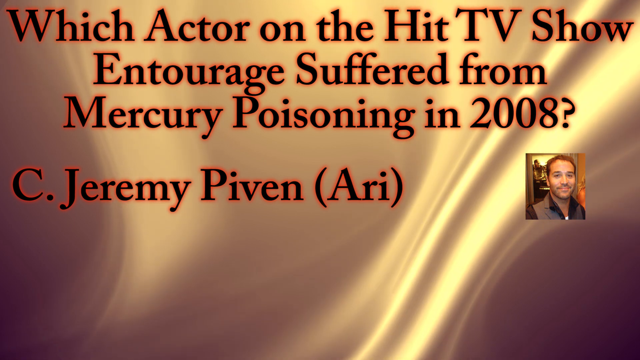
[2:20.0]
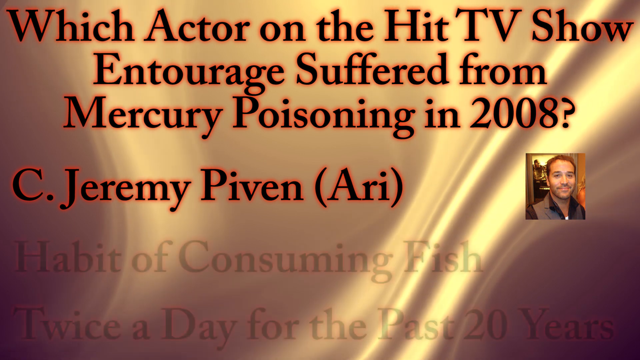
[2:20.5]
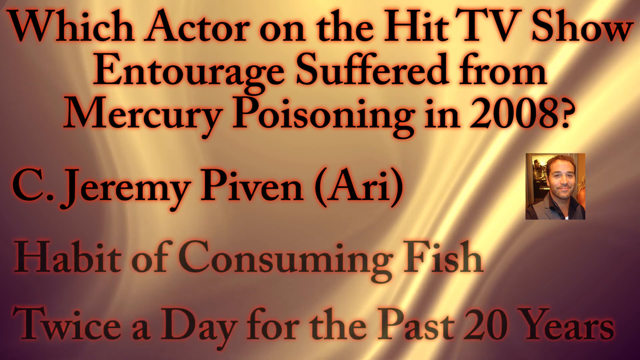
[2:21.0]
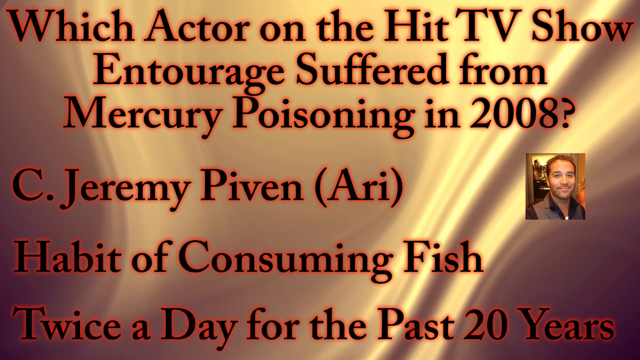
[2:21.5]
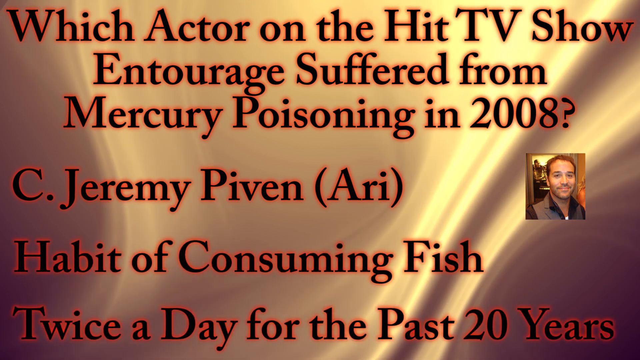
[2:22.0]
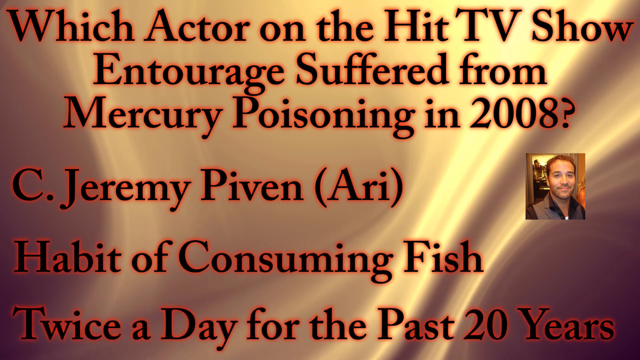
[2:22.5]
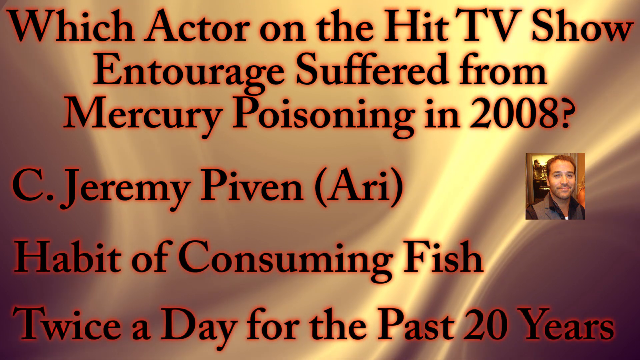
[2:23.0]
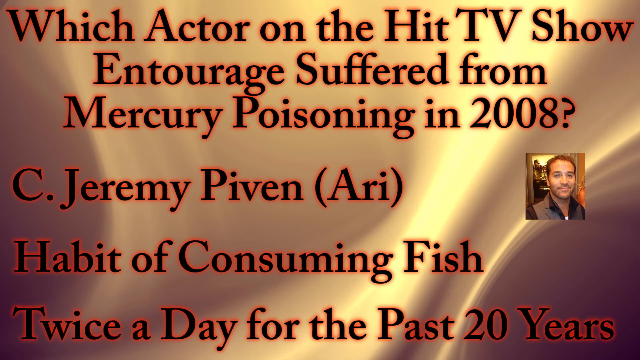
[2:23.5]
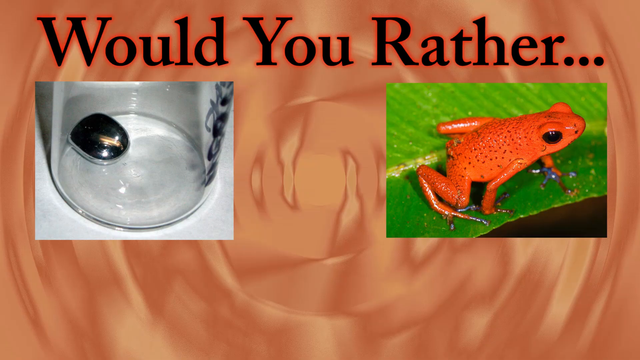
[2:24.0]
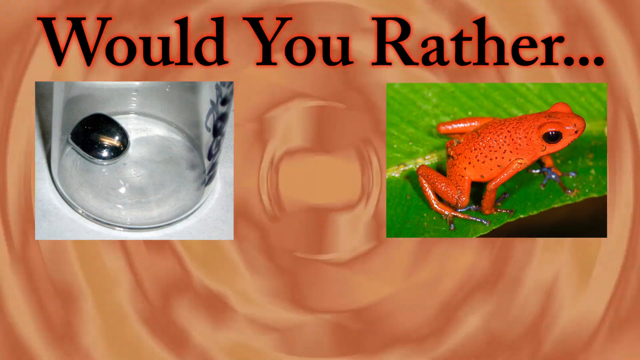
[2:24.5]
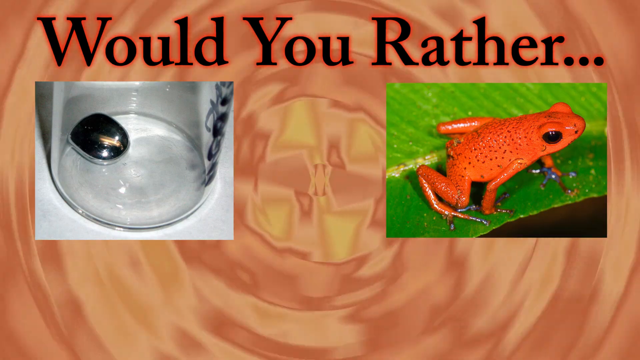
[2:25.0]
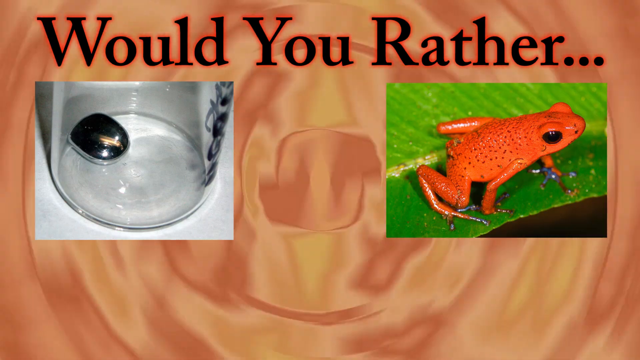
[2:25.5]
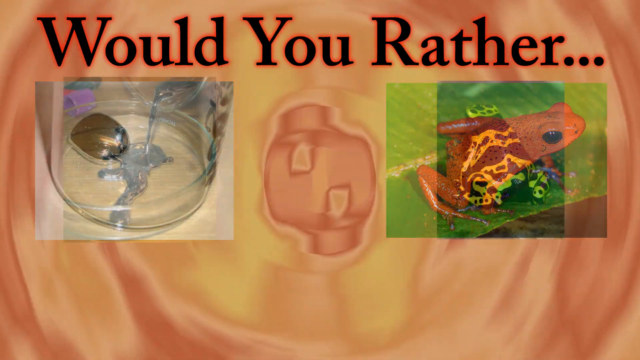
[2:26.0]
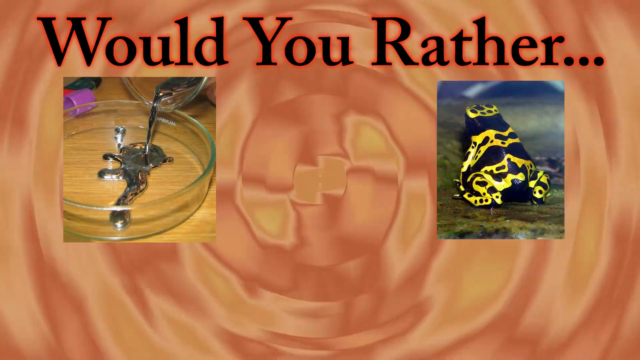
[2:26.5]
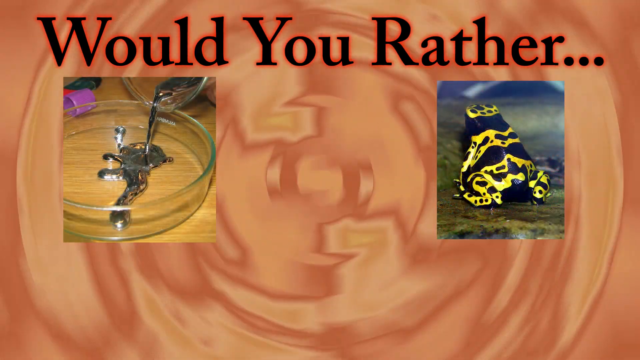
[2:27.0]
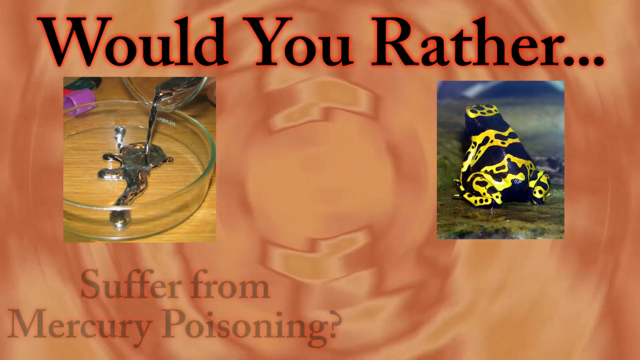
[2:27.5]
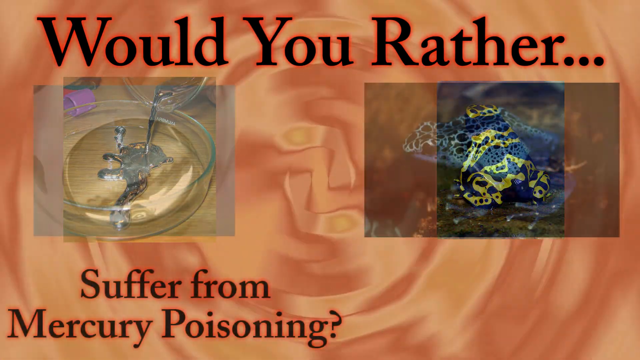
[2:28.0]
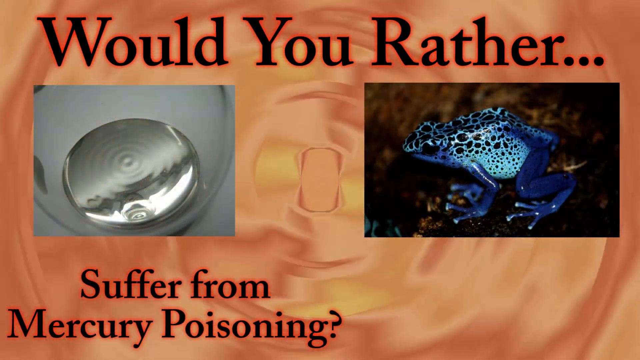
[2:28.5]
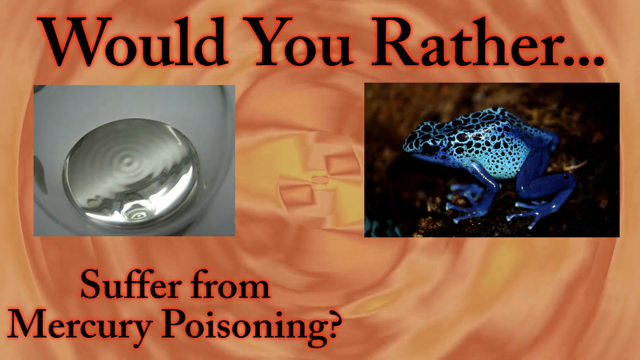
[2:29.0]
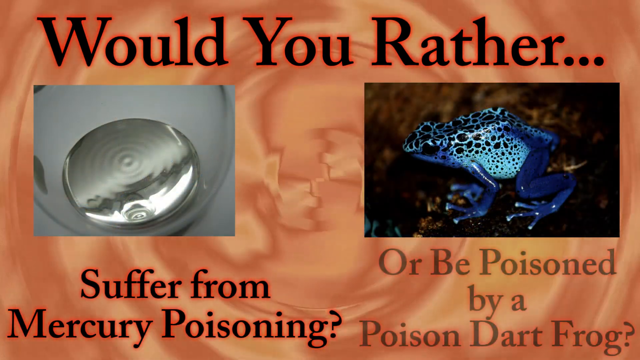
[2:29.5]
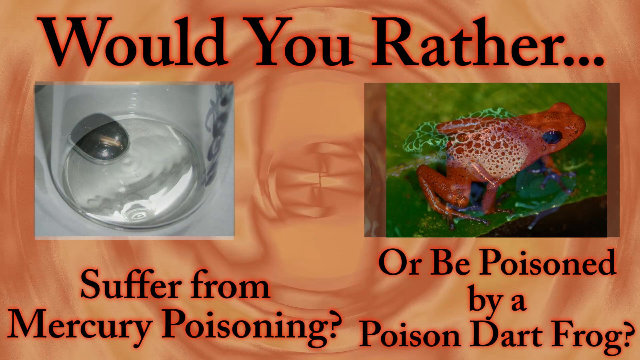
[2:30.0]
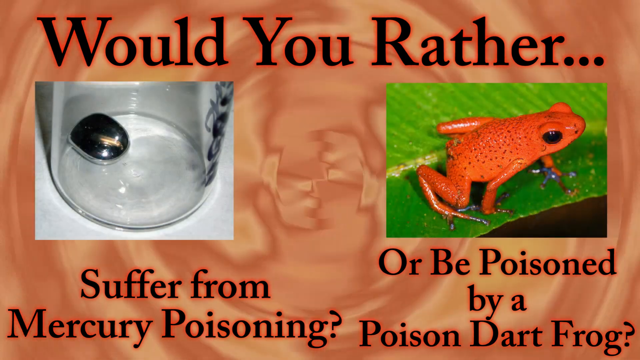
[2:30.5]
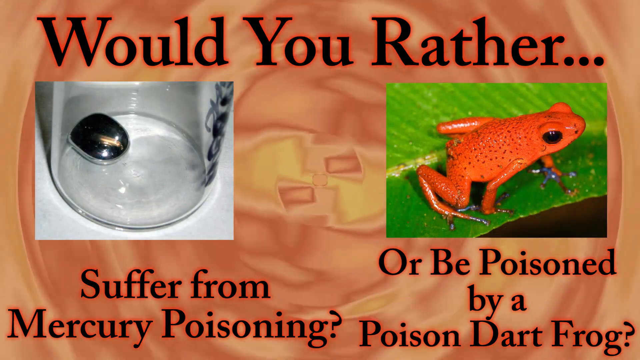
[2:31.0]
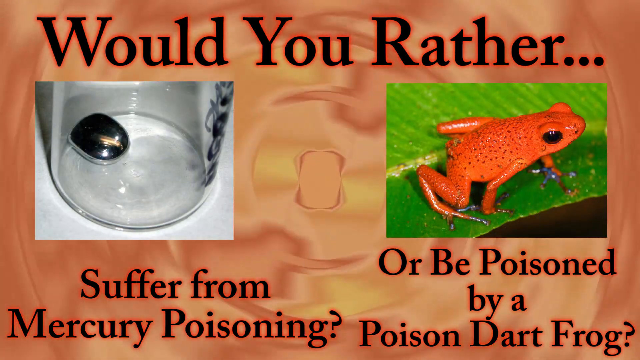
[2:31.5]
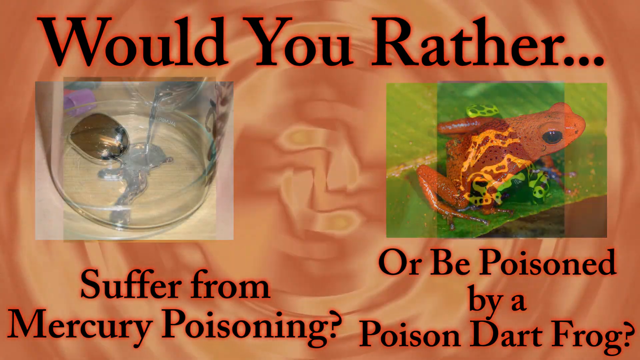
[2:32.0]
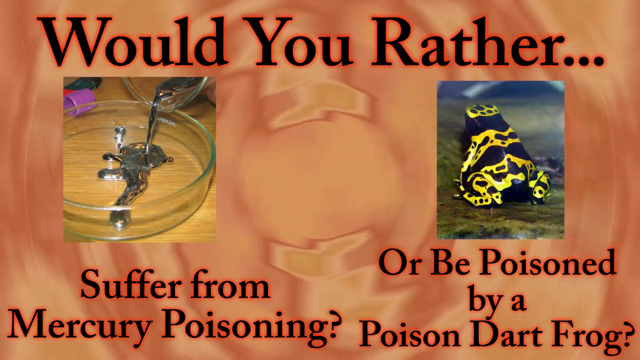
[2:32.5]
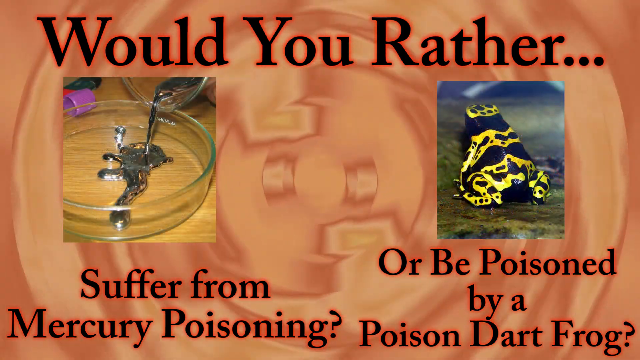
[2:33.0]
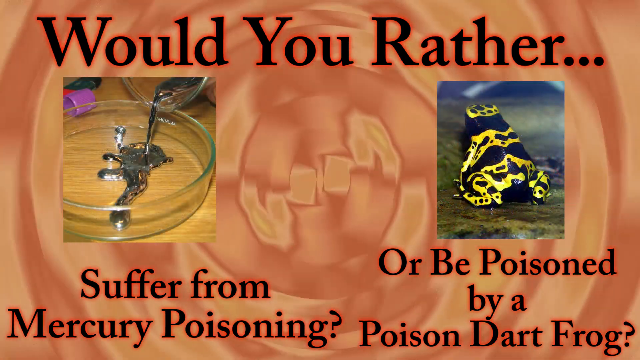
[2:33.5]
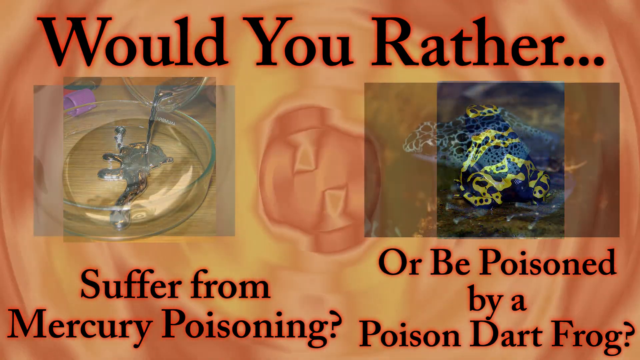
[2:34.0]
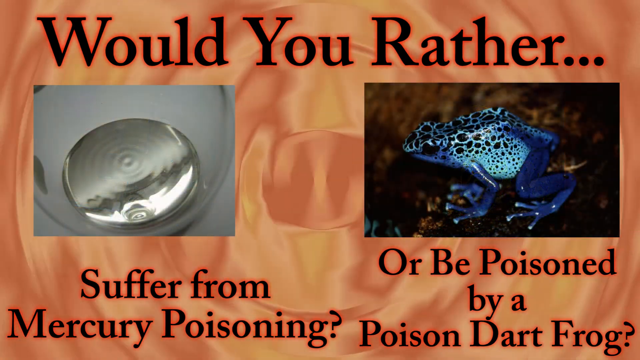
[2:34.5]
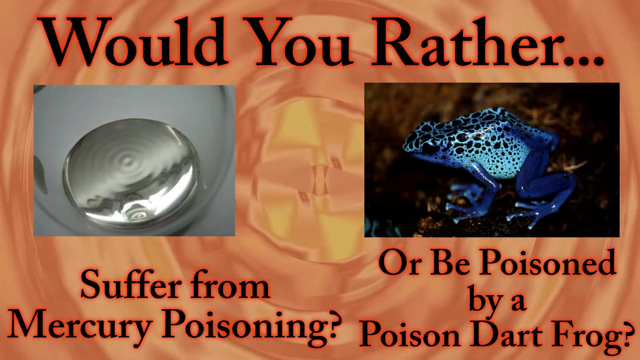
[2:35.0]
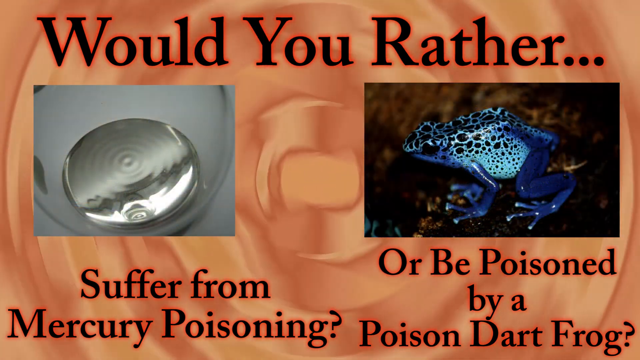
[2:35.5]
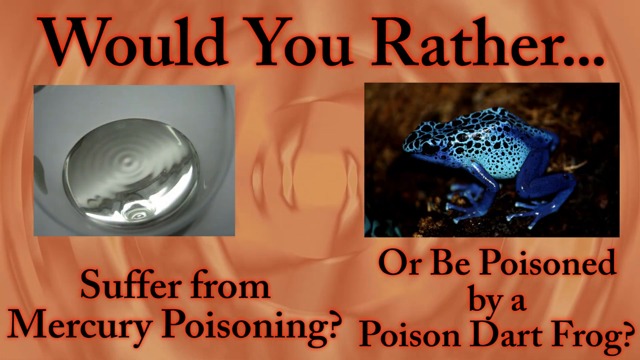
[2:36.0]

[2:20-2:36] The video asks whether you would rather be poisoned by mercury poisoning or by a poisonous duck frog. It states that mercury exposure can lead to heart disease, deterioration of the stomach and intestines, and neurological complications, and that after exposure one should bathe with water and soap and wash the eyes with saline solution. Symptoms listed include the palms peeling, swollen hands and unexplained pain in the body. Ways of exposure named are breathing contaminated air and contact with water bodies contaminated with mercury.